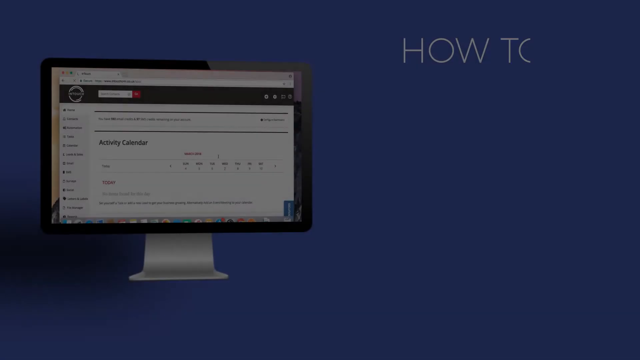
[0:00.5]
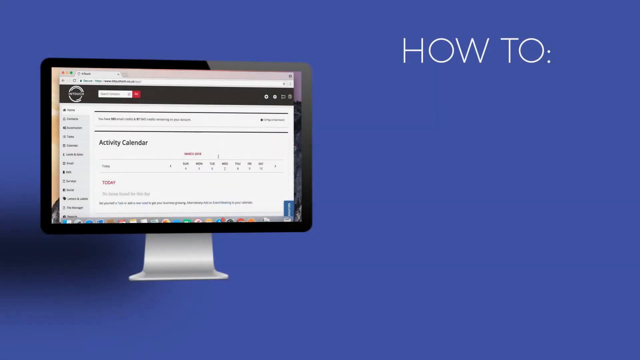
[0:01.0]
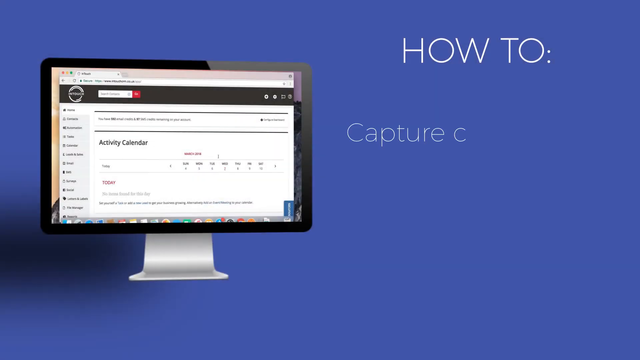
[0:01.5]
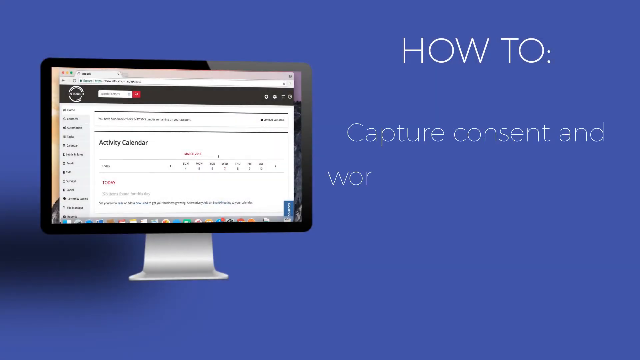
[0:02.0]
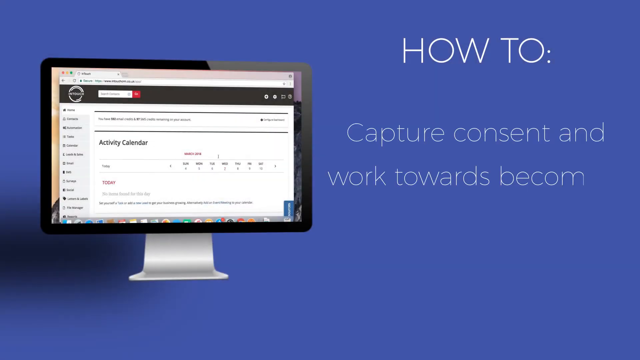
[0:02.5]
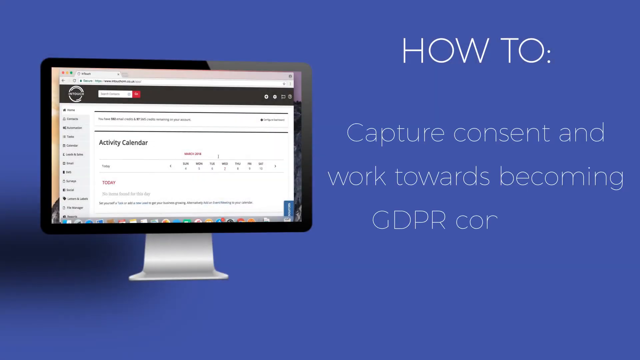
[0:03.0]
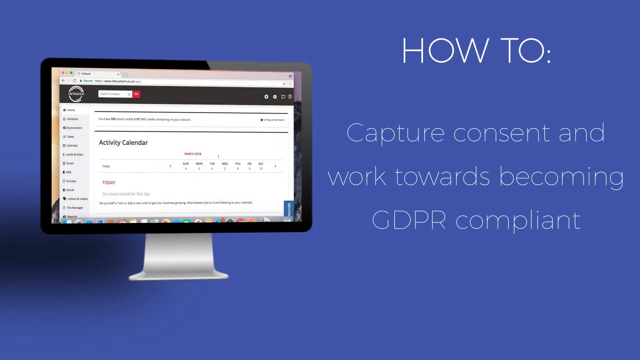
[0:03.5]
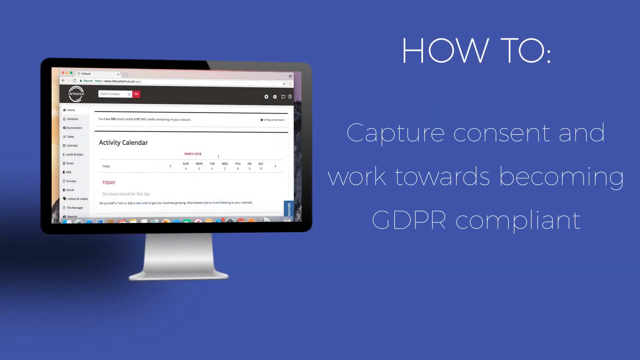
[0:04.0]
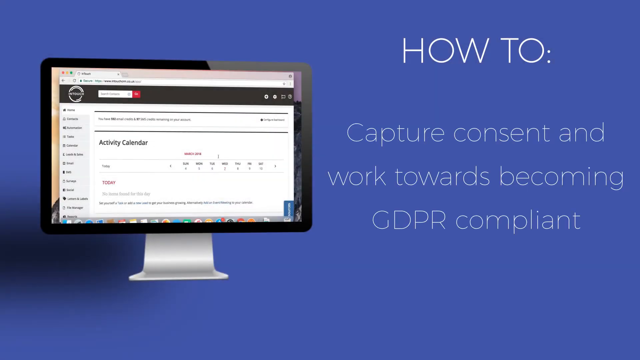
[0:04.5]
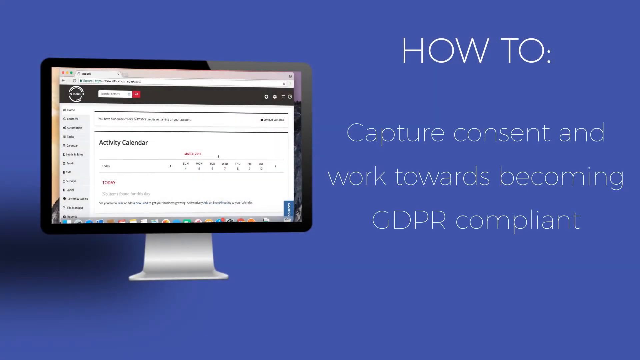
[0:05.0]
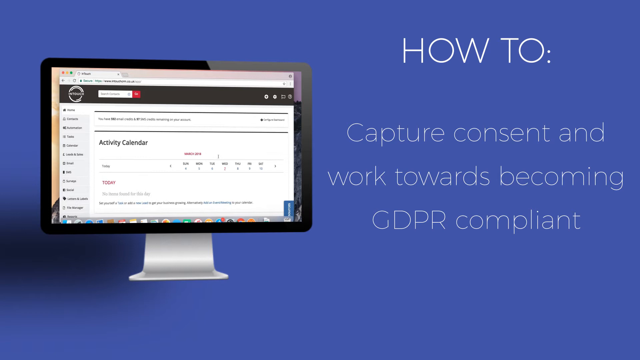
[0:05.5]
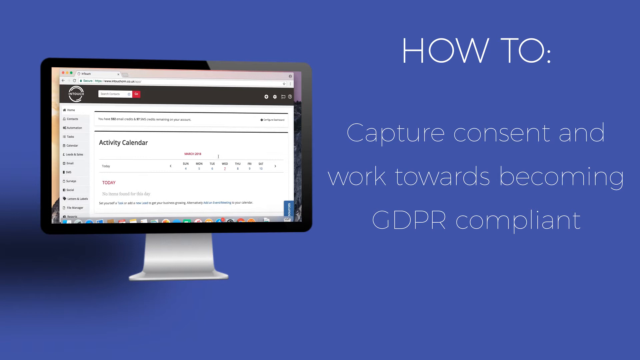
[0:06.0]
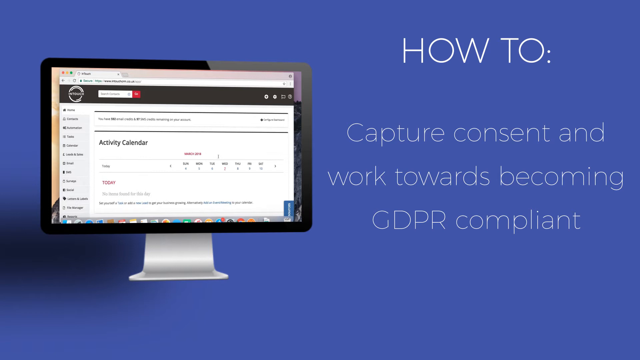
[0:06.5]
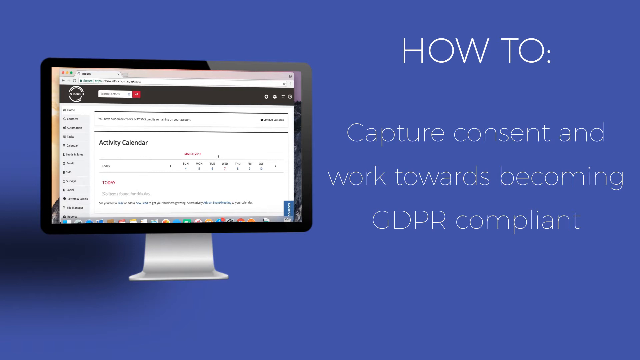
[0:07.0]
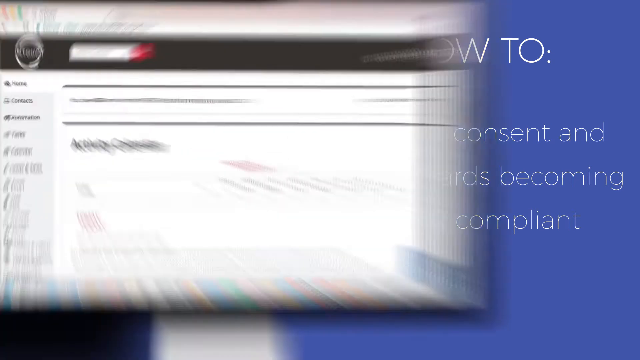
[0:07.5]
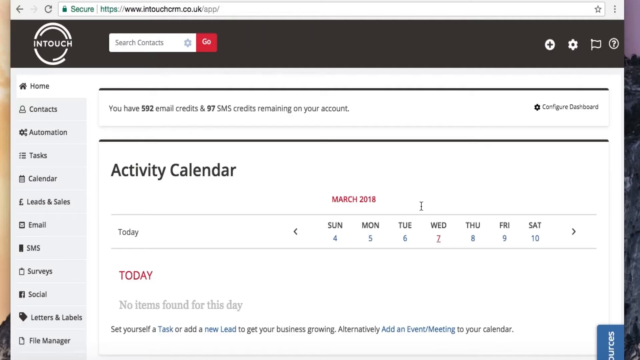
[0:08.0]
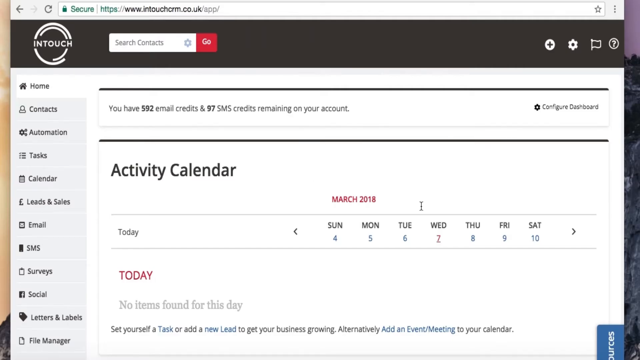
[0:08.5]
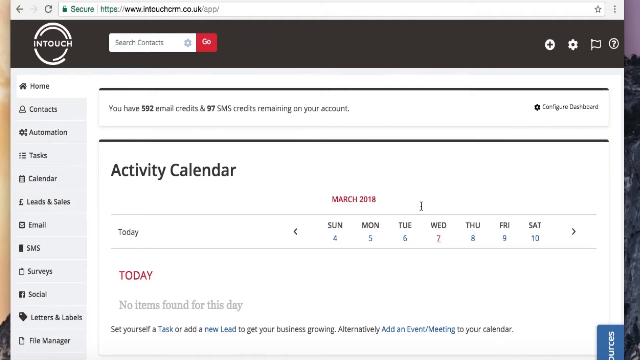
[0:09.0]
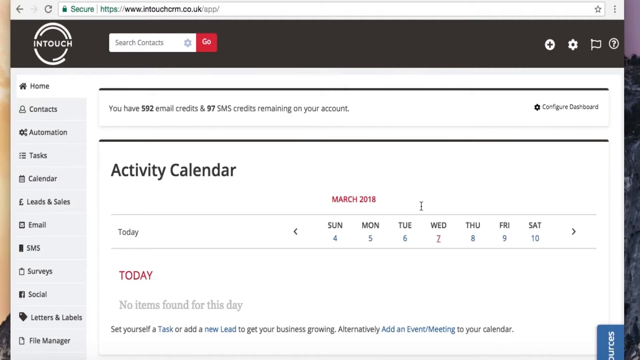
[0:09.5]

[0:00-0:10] The video opens on a blue background with a laptop screen on the left side; the laptop's stand at the bottom is gray. To the right, white text reads "how to" and below it "capture consent and work towards becoming GDPR compliant." The view then zooms in on the laptop screen, which shows a web page. The page has a search bar at the top, and below it a black bar runs across with "In Touch" in white. There is another search bar with a red Go button, followed by Add, Settings, Flag and Questions buttons. Down the left side are about 10 clickable links, including Home, Contacts, Automation, Tasks and Calendar. To the right is an activity calendar, though it is not a full calendar: it just says "March 2018" and shows the 4th through the 10th.